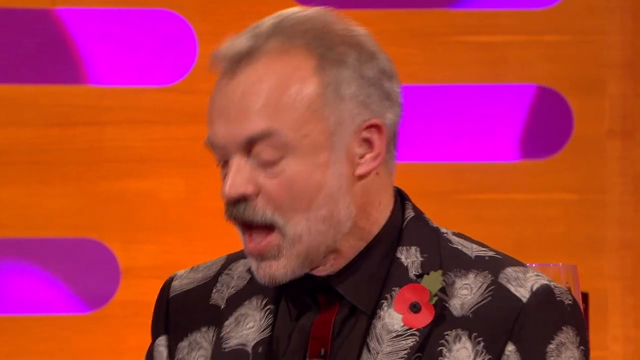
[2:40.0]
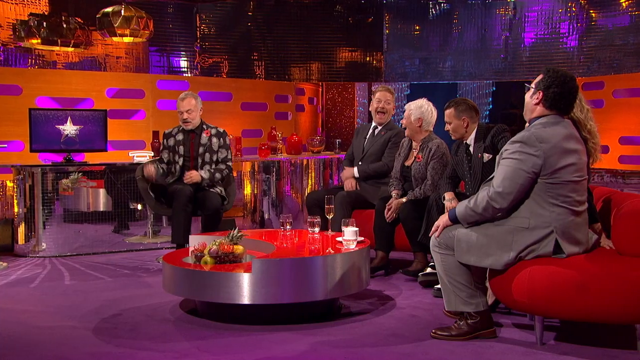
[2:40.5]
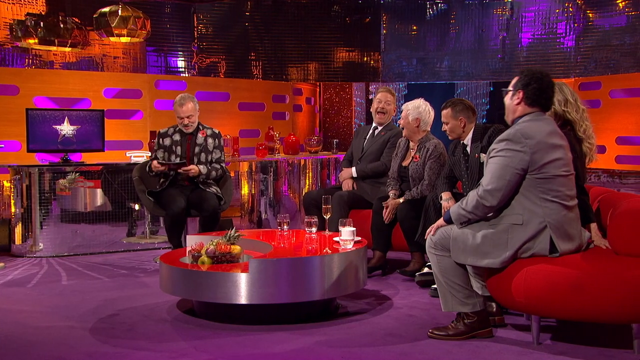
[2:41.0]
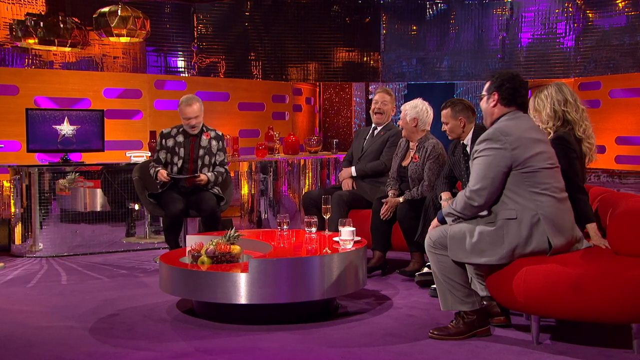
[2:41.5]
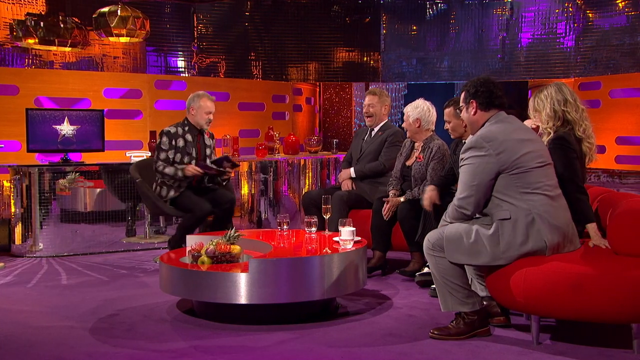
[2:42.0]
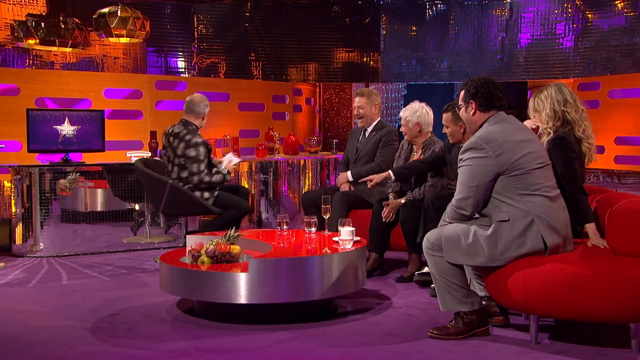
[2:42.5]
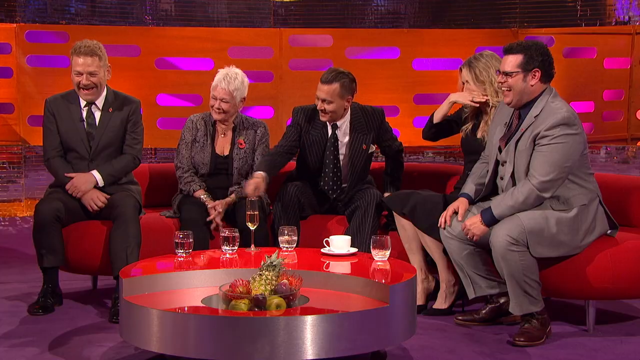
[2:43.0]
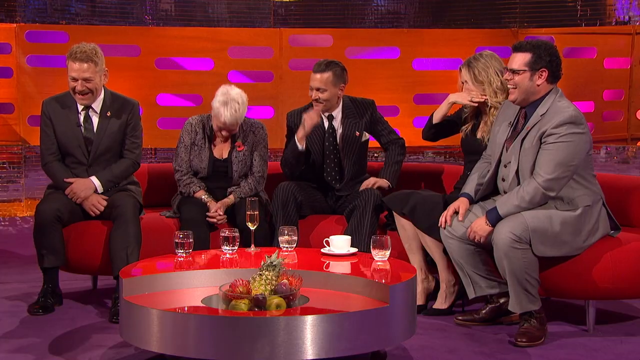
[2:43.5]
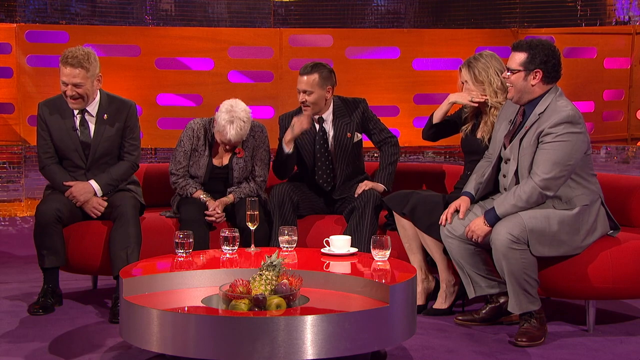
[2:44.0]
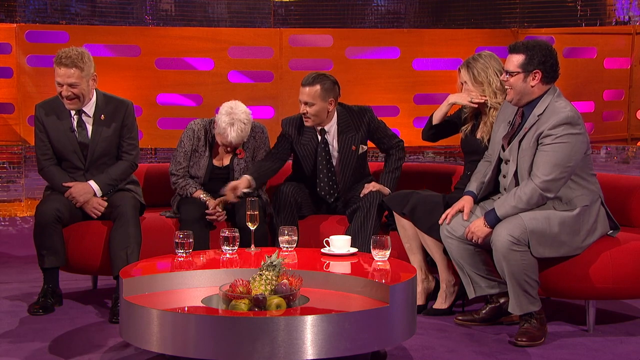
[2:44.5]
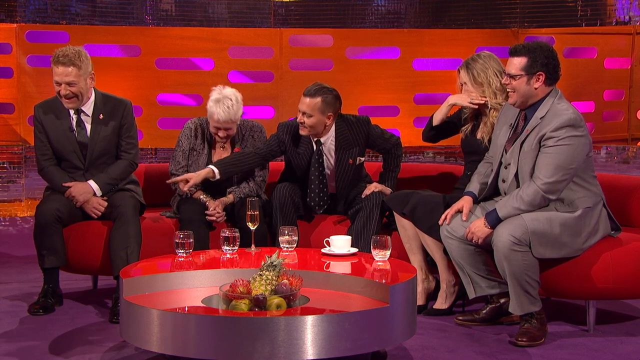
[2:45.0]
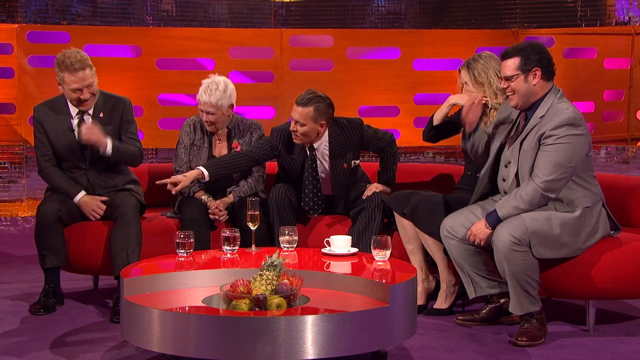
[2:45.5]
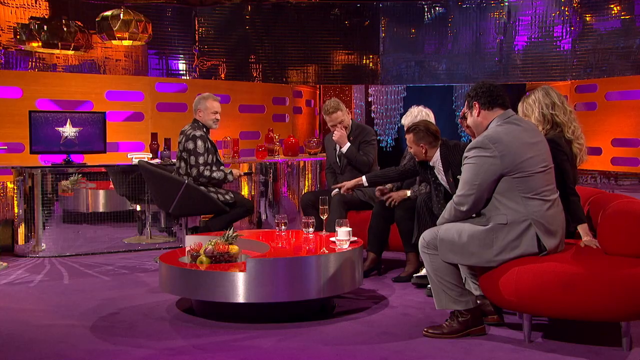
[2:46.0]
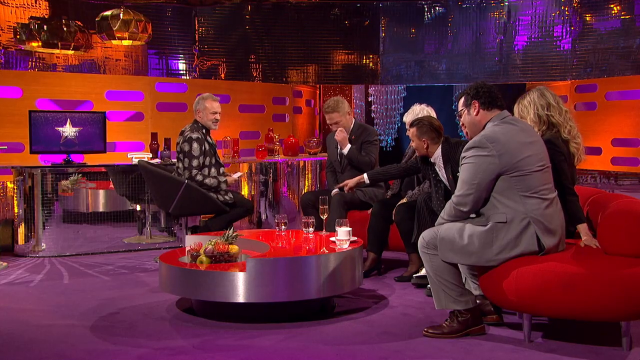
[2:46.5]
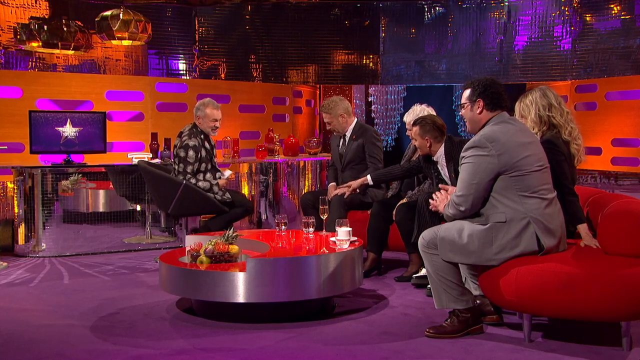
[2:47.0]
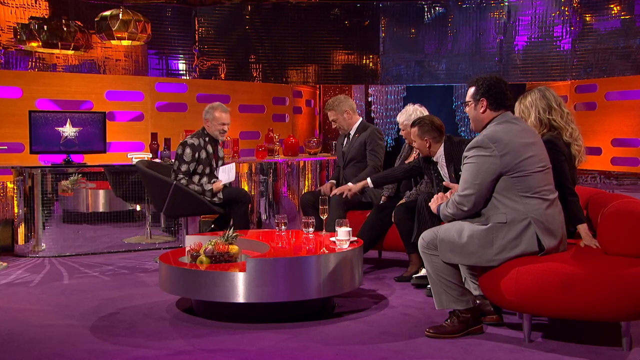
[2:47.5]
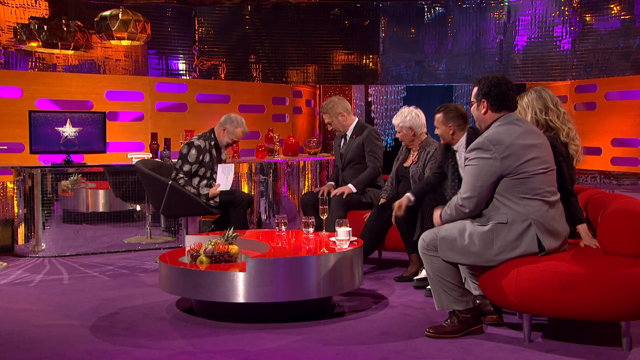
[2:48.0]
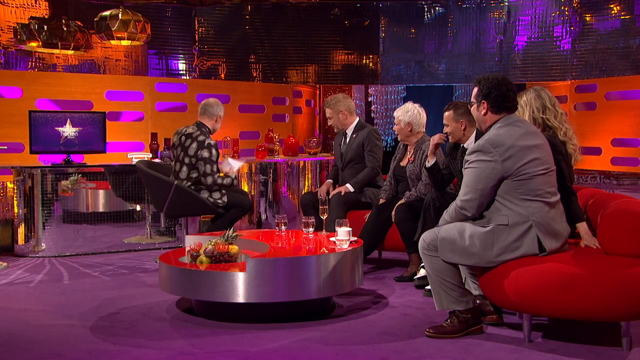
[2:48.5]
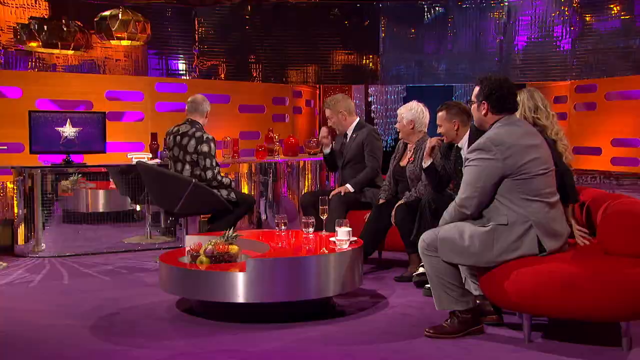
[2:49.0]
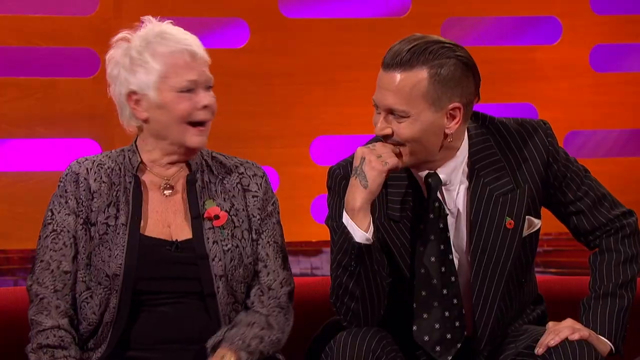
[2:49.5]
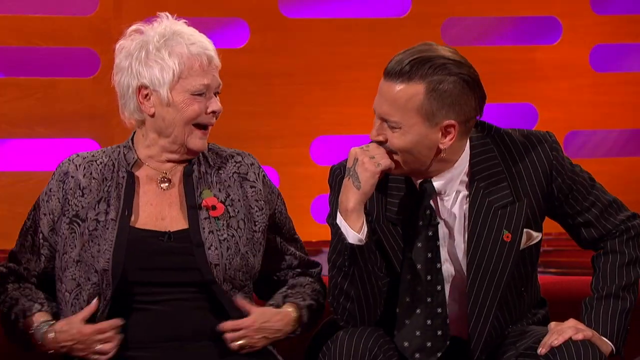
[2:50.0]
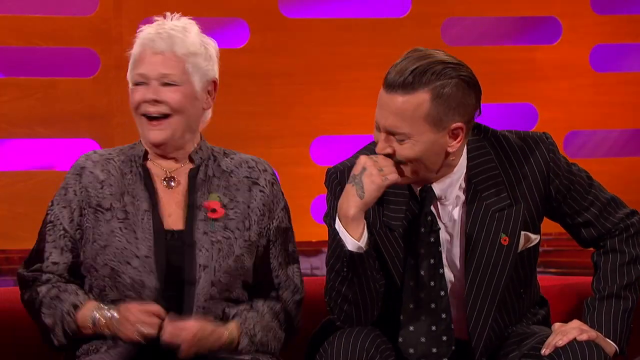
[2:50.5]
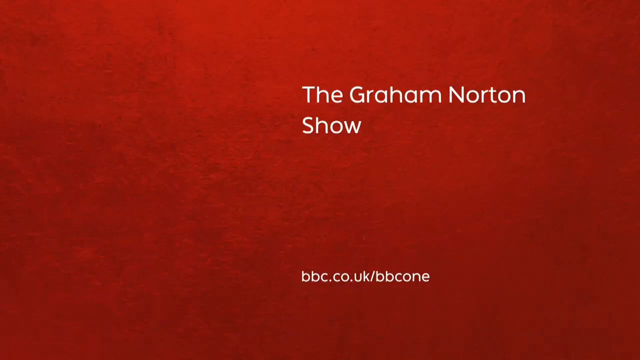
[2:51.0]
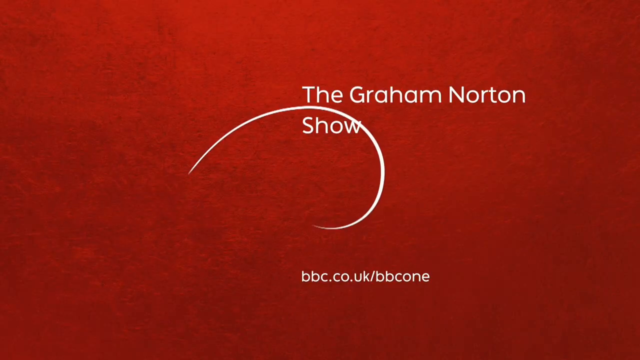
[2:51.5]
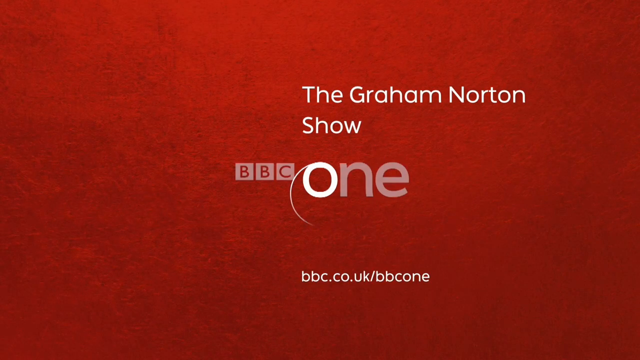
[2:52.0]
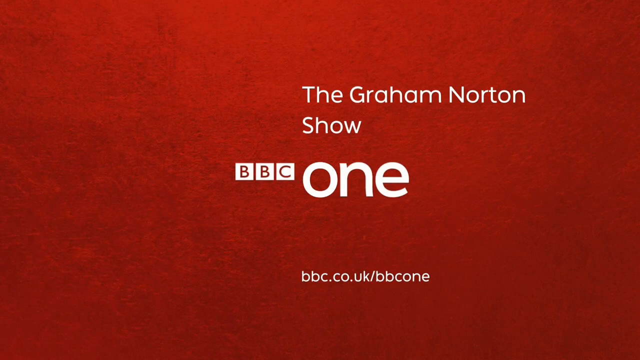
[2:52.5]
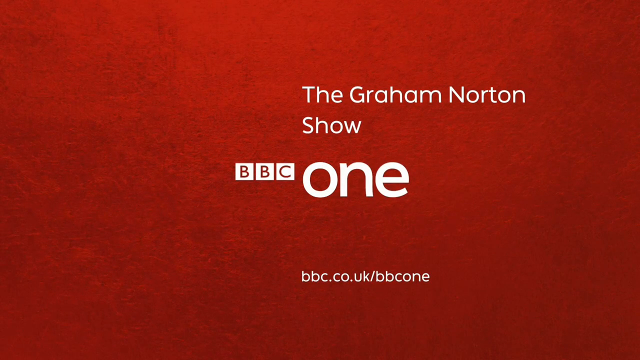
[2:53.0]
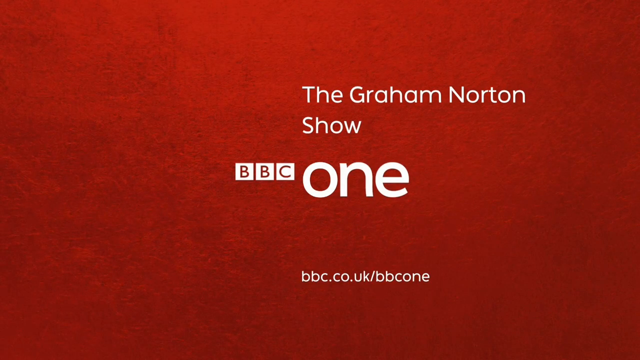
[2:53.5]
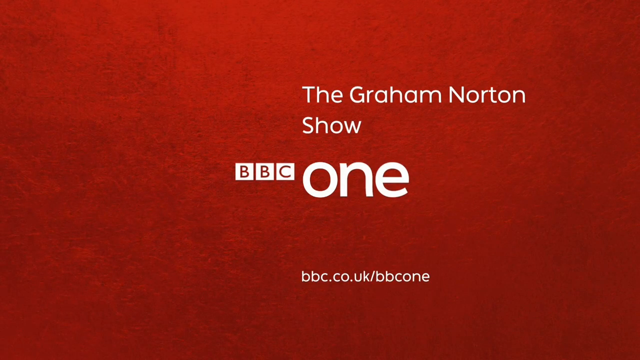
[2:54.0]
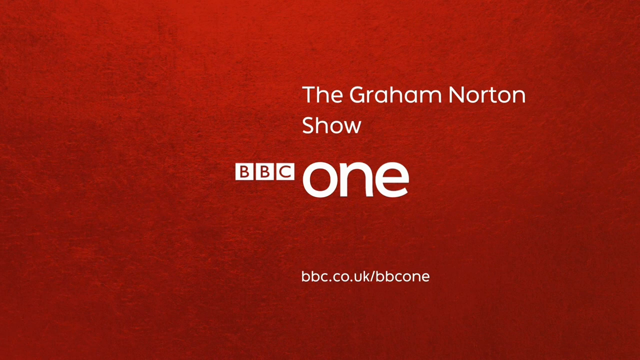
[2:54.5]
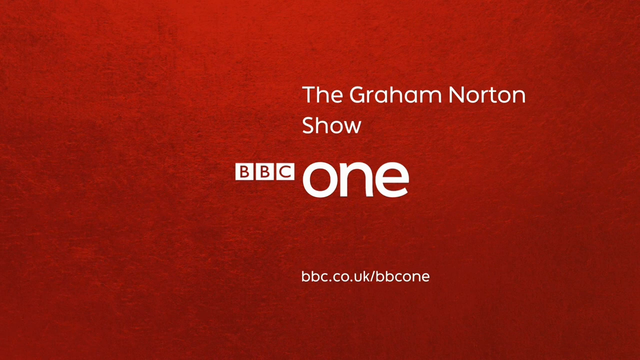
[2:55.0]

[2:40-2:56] A full view shows everyone. The man in the black suit with red hair is kind of laughing, looking toward the group with his left hand on his right forearm. The white-haired woman faces the host, laughing, and the host spins to his left on the chair, facing the back and grabbing something. The camera shows the group on the seats: the blonde-haired woman covers her nose with her right hand, Johnny Depp again puts his hand on his mouth with his left hand on his left knee, and the white-haired woman leans over, laughing. The host faces the group once again, the card in his right hand, leaning over, then places the cards on something behind him with his left hand. The white-haired woman adjusts her blouse while laughing. At the end of the video, the red screen returns with the text "the Graham Norton show BBC one BBC.co.uk/BBC one e."